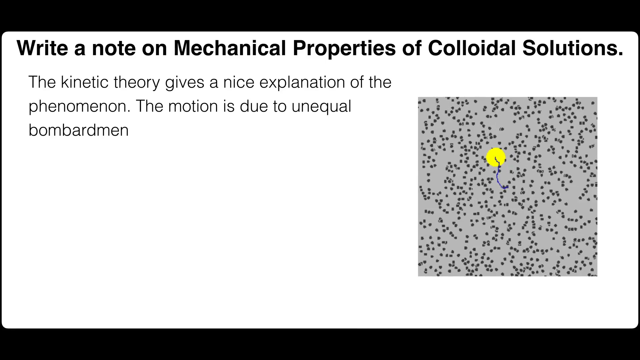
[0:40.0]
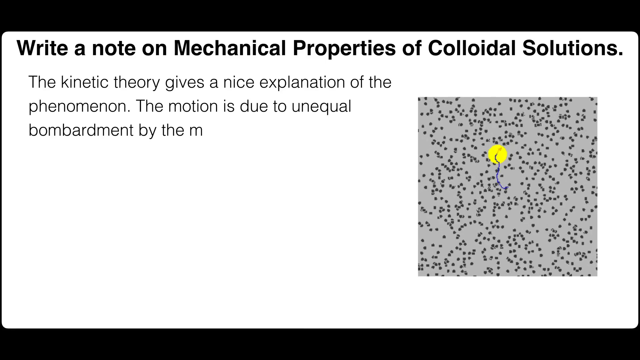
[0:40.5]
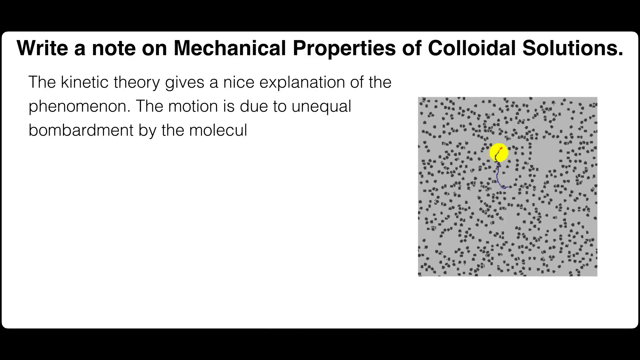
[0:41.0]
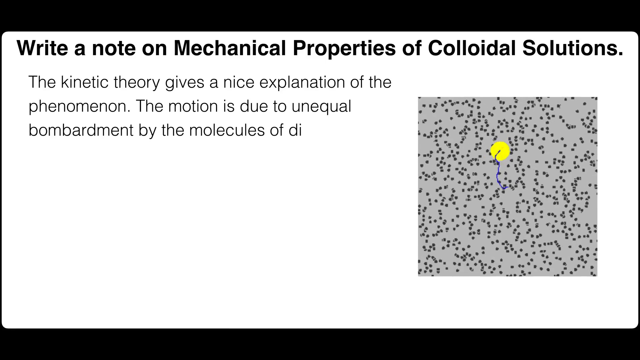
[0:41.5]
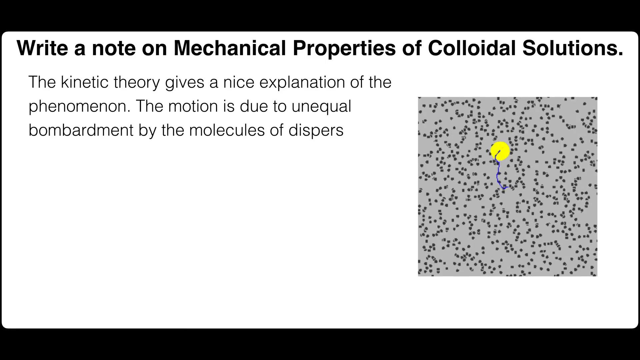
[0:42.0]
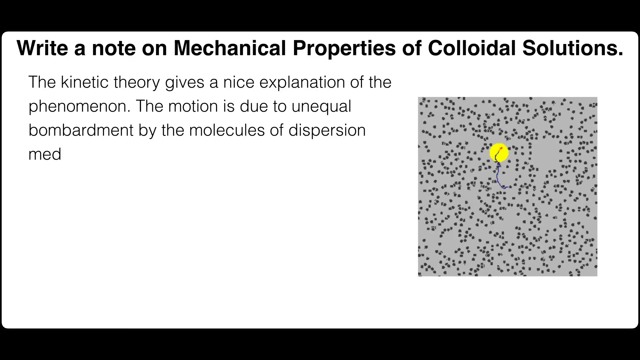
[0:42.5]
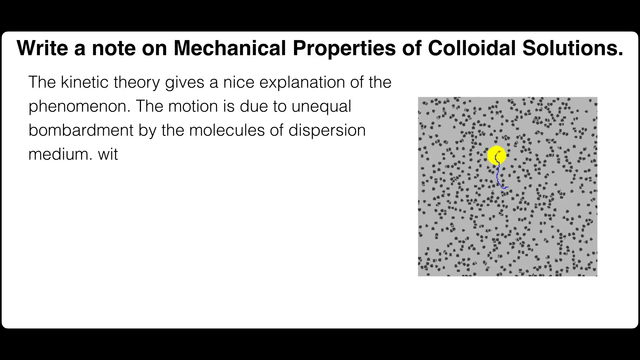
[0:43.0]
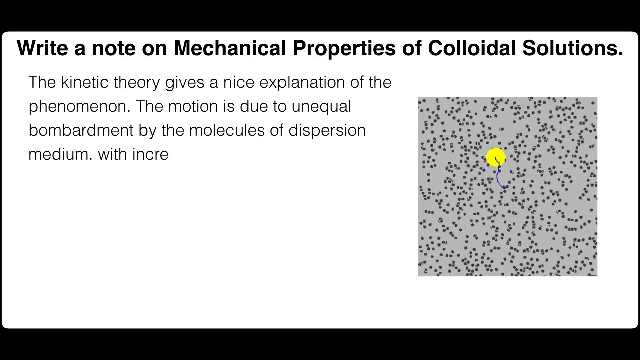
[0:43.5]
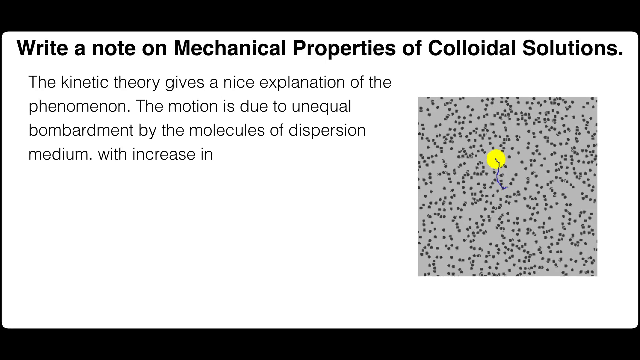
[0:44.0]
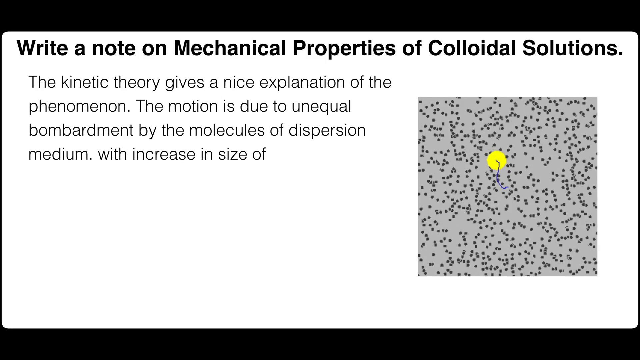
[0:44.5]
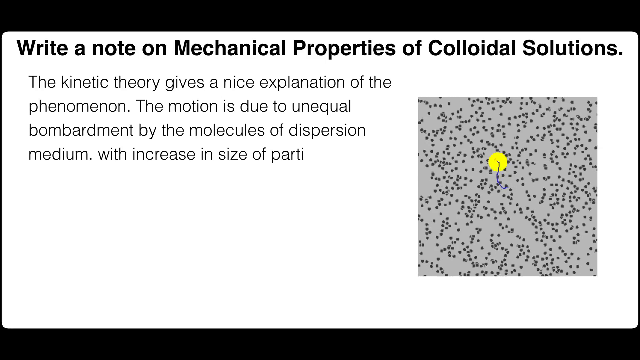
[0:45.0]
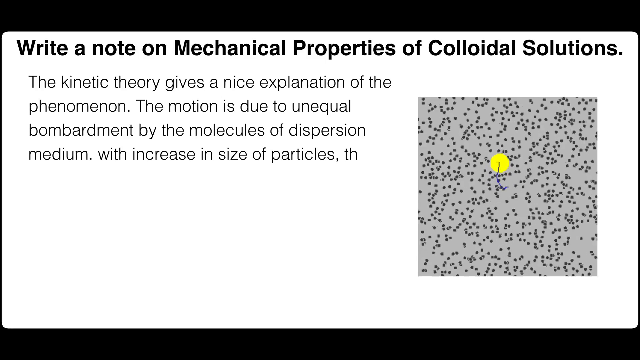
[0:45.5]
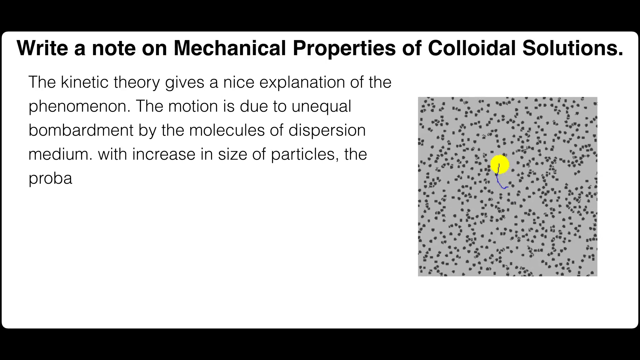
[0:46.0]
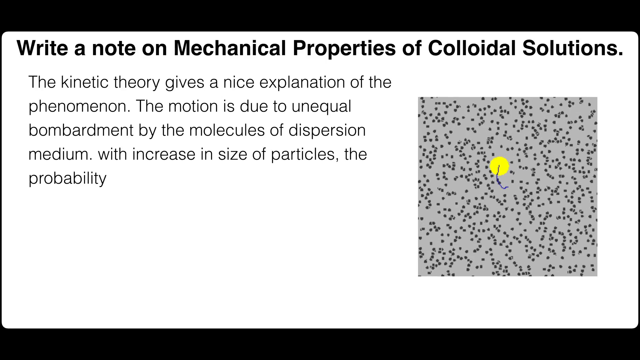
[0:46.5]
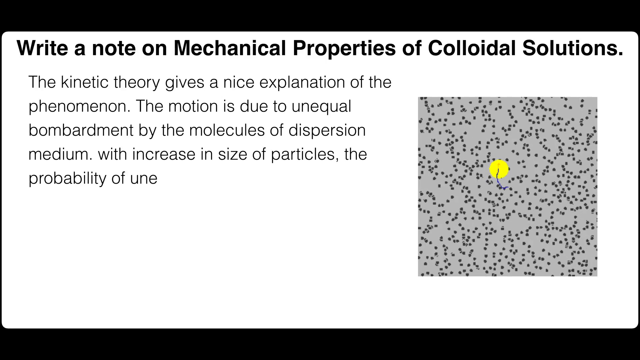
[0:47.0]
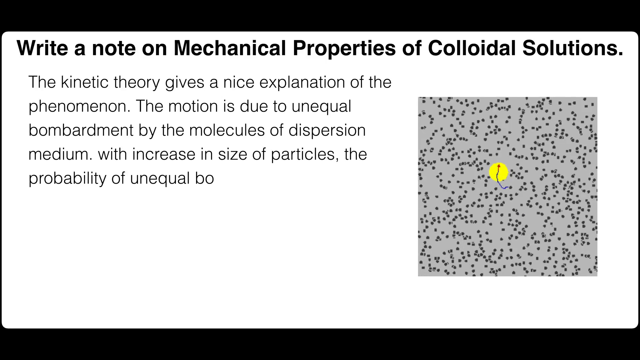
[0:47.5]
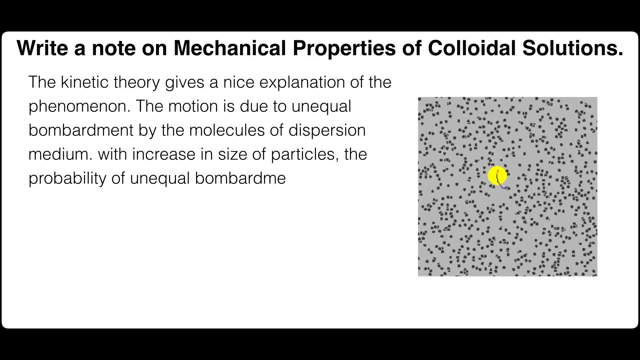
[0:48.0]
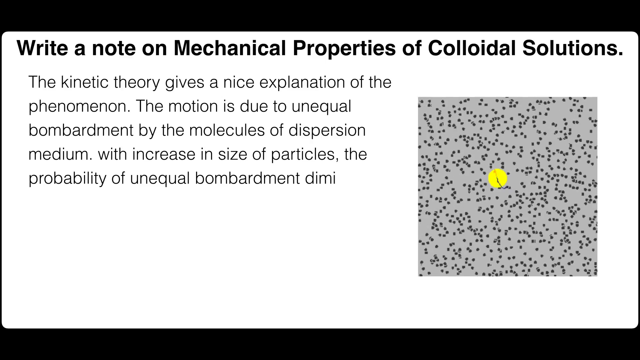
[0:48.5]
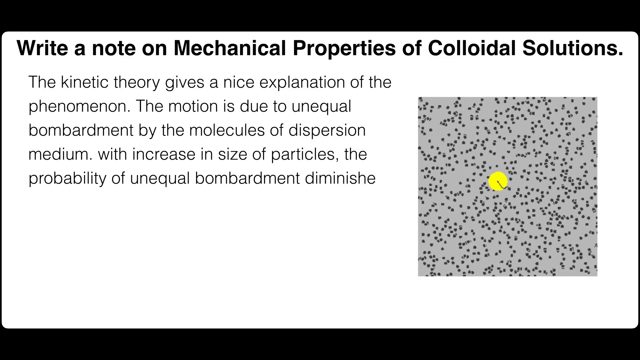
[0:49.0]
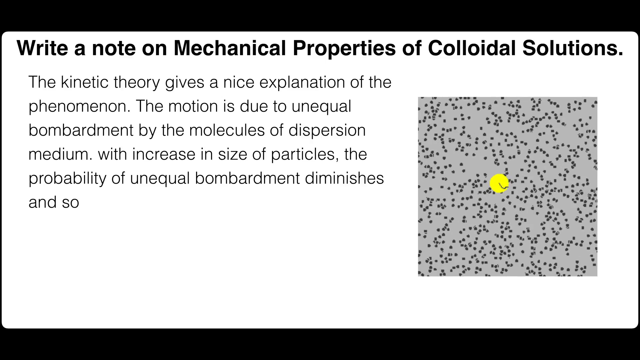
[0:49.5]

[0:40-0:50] Text about how the mechanical properties of colloidal solutions arise is typed onto the screen word for word, including "The motion is due to unequal bombardment by the molecules of dispersion medium. With increase in size of particles, the probability of unequal bombardment diminishes". In the bottom right corner of the slide is a demonstration of colloidal particles of two different sizes, illustrating diffusion.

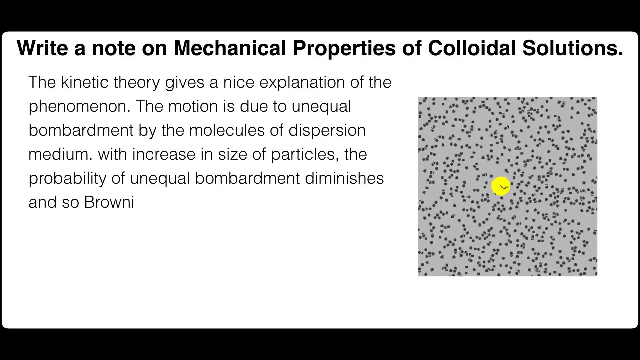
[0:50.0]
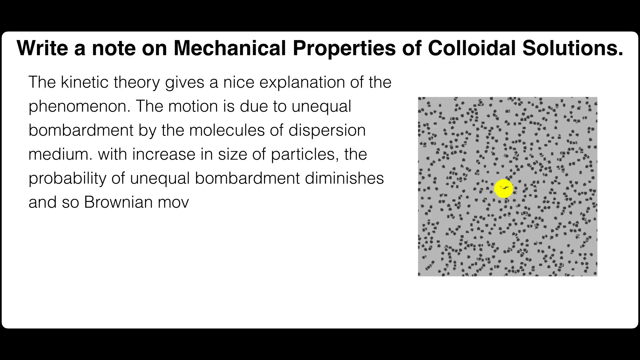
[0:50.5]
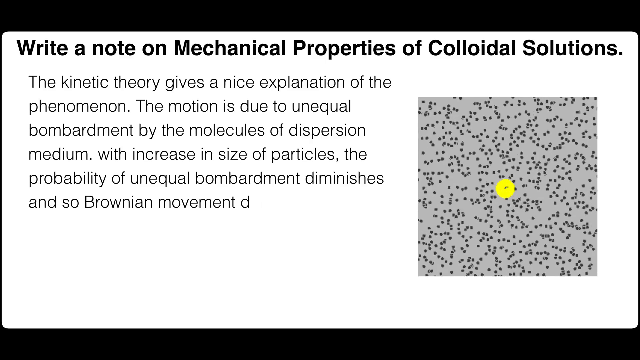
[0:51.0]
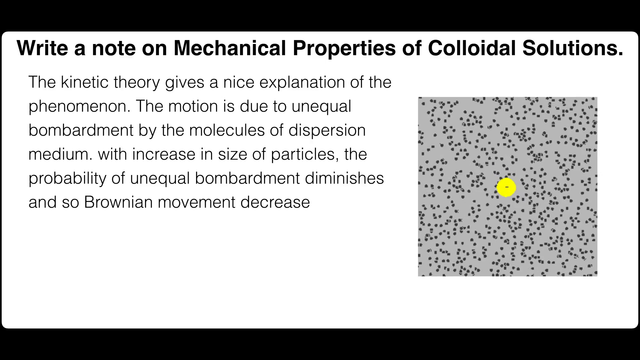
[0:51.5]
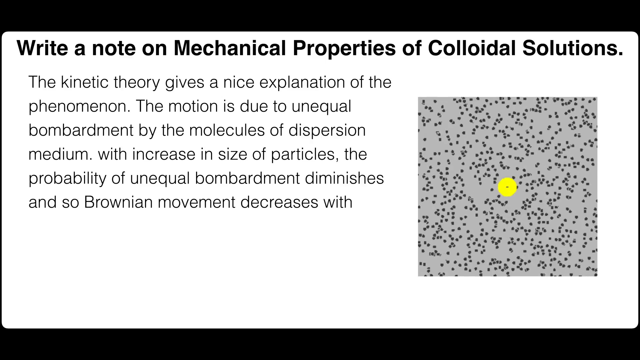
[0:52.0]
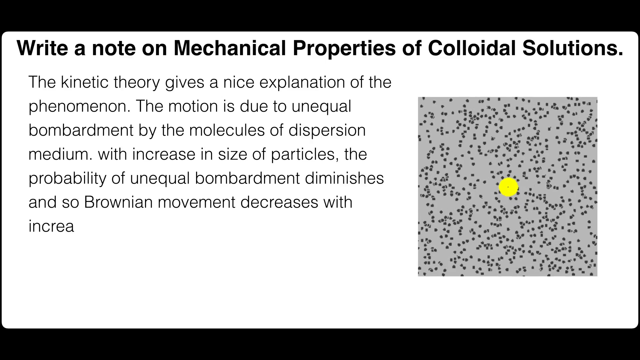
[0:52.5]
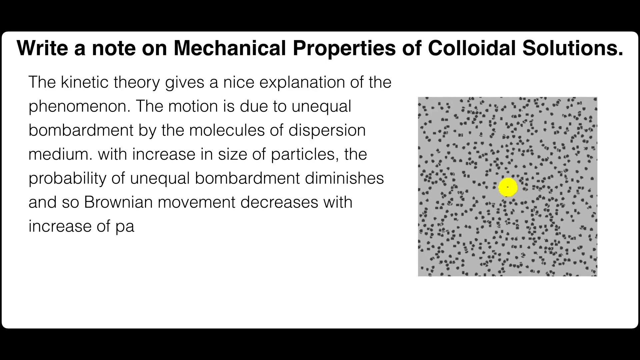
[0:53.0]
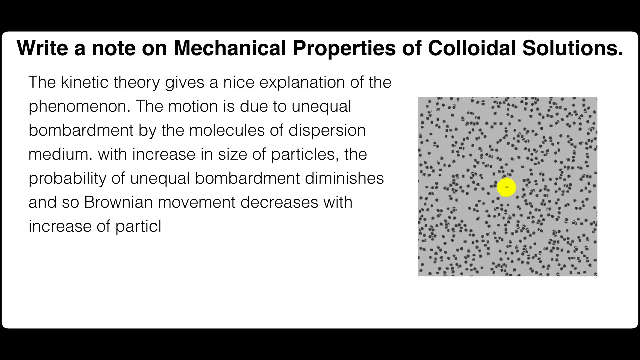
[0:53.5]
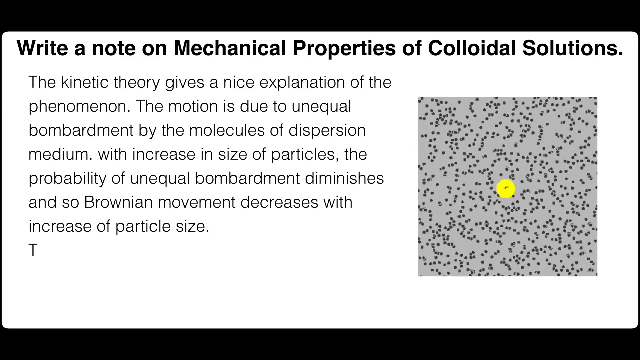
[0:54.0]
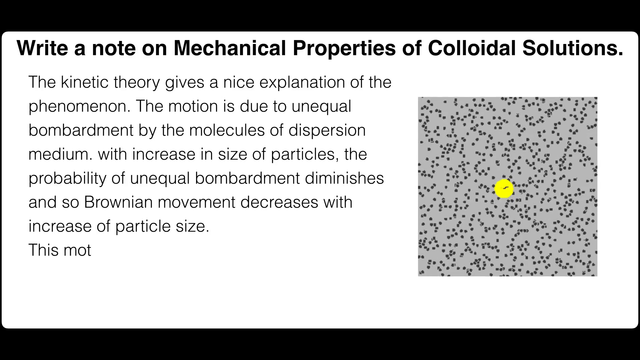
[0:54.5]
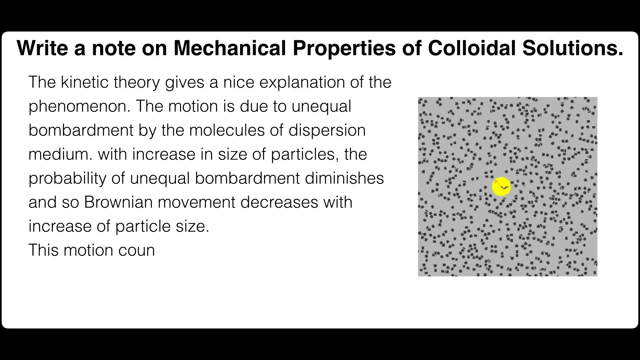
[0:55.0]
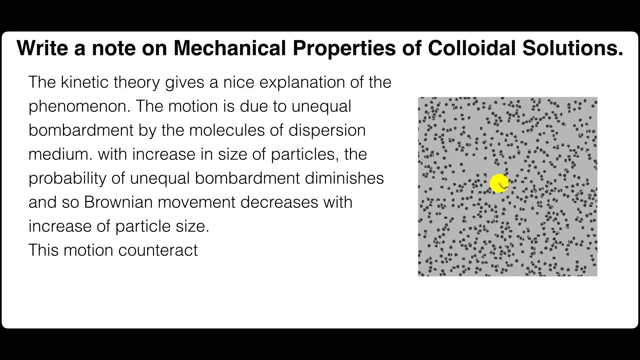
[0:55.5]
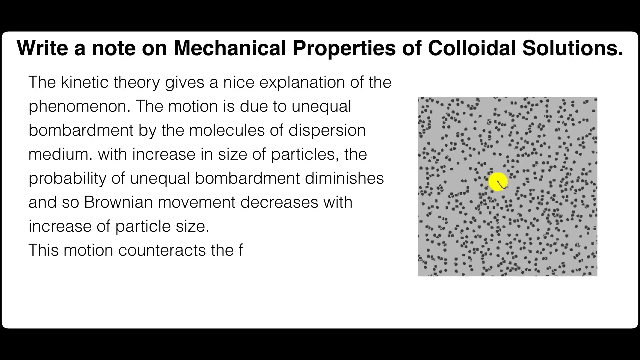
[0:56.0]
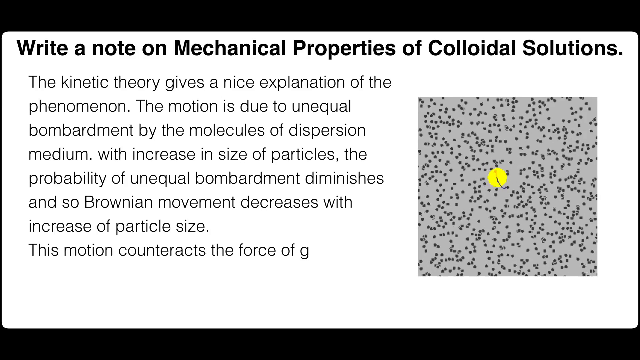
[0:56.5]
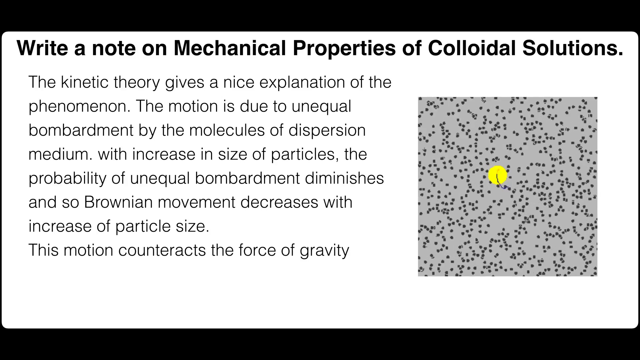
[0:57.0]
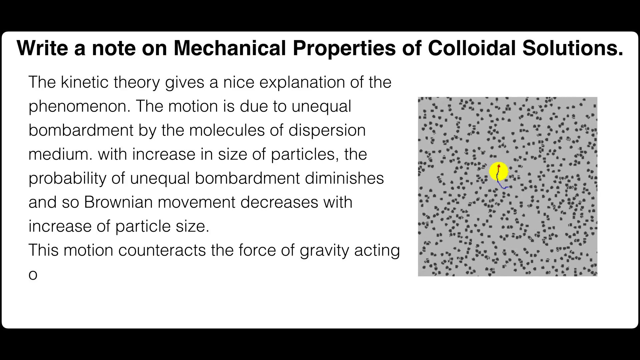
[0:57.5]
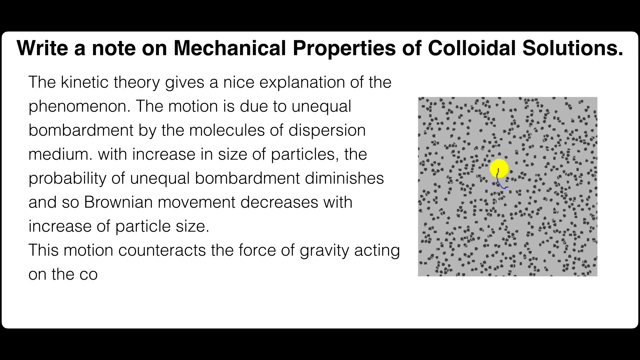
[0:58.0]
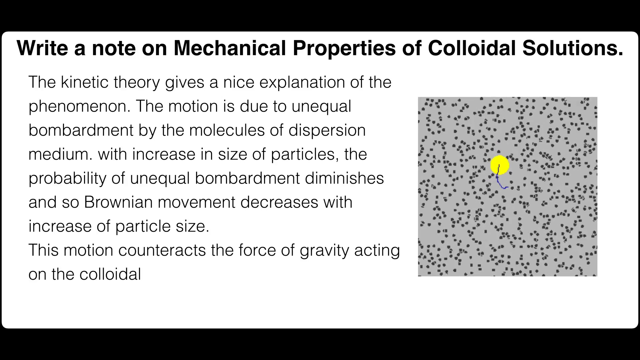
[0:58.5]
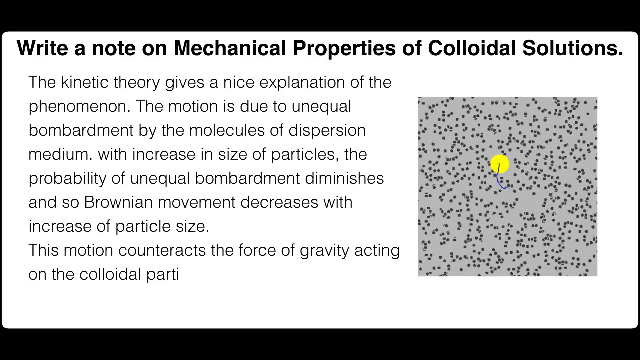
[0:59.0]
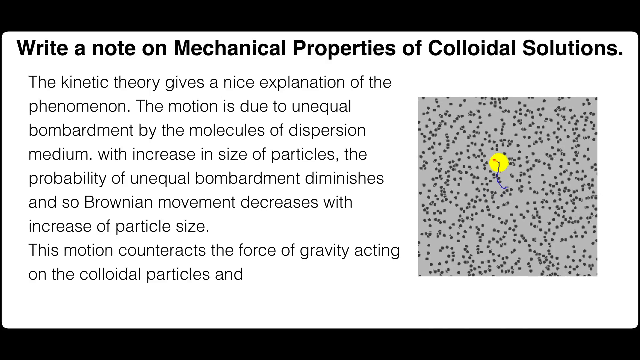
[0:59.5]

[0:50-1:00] A slide carries the heading "write a note on mechanical properties of colloidal solutions". In the right corner is a video of a colloidal suspension under a microscope: many tiny dots with one much larger yellow dot in the middle. The particles form a zigzagging pattern called Brownian movement.